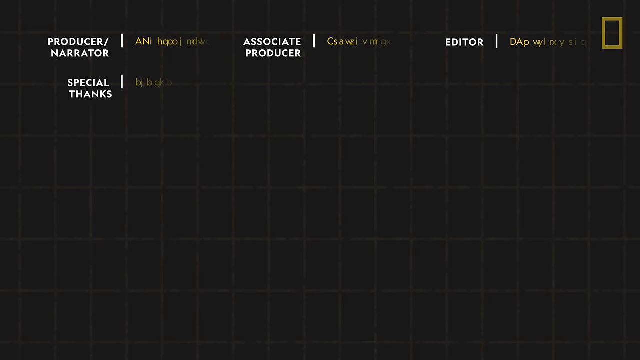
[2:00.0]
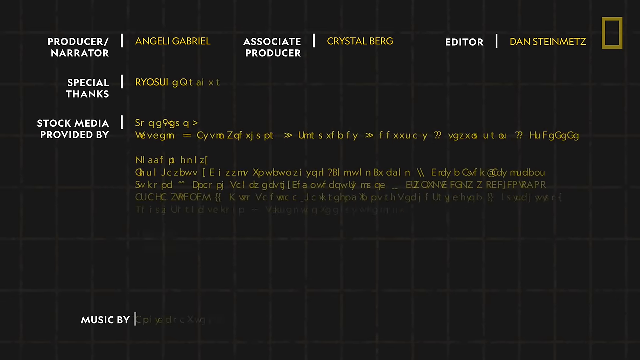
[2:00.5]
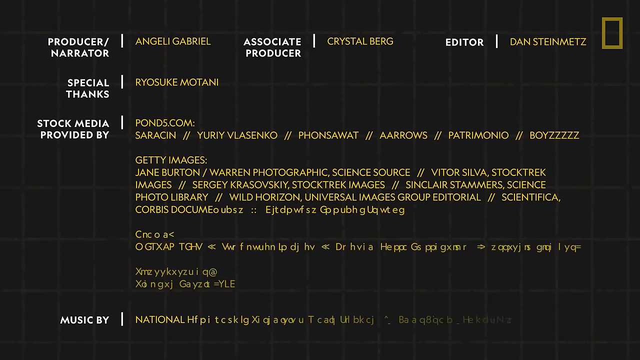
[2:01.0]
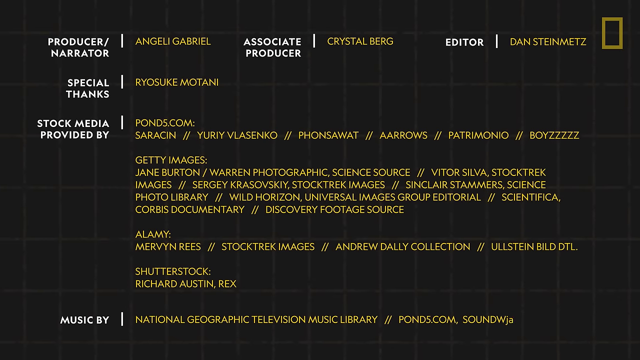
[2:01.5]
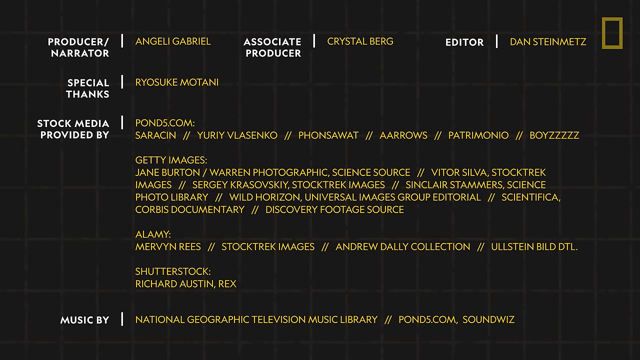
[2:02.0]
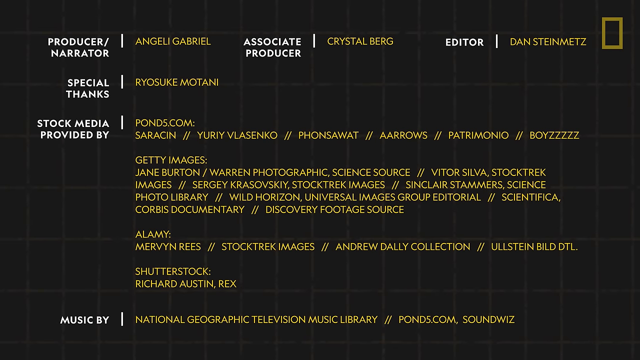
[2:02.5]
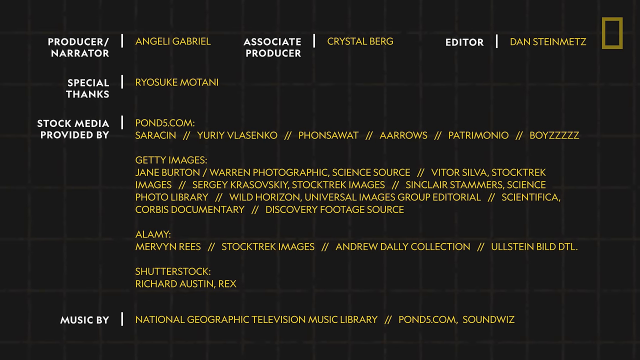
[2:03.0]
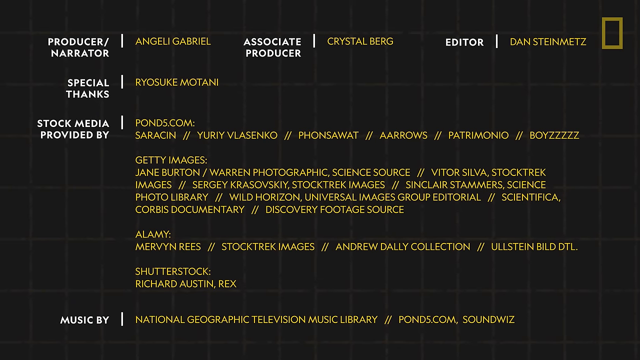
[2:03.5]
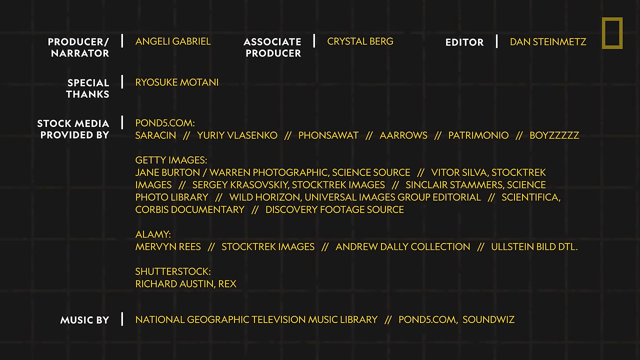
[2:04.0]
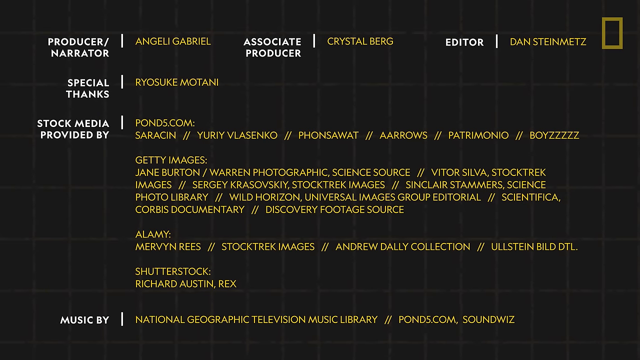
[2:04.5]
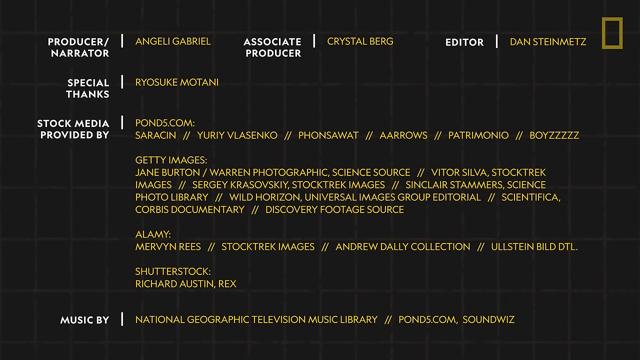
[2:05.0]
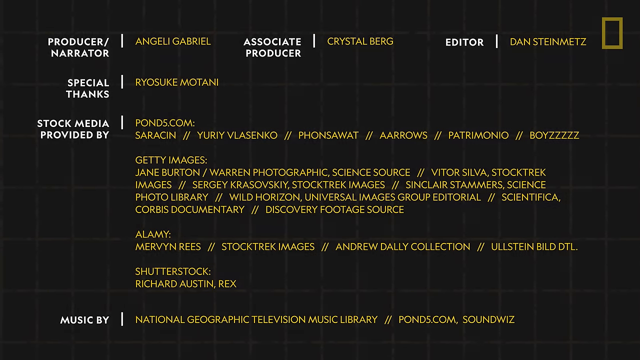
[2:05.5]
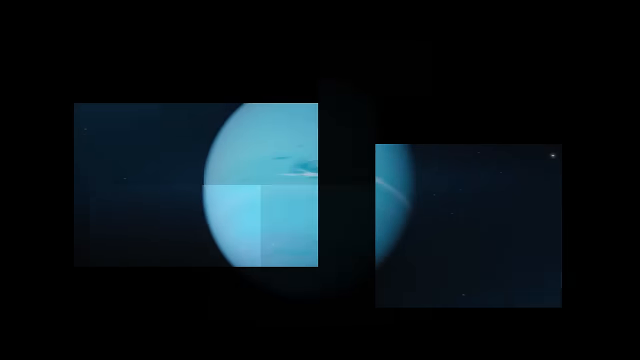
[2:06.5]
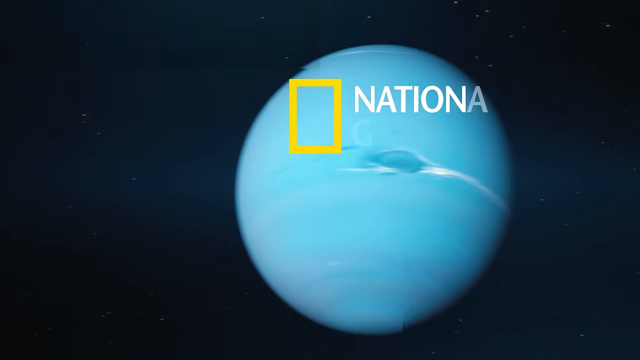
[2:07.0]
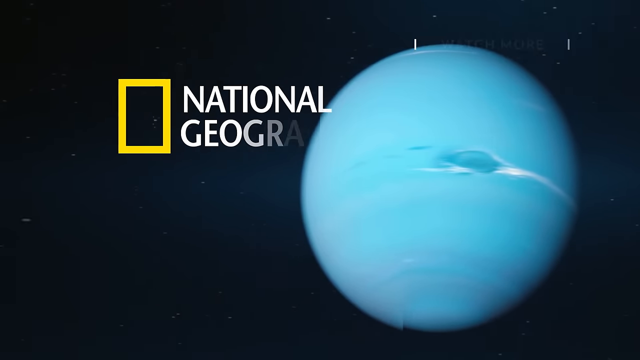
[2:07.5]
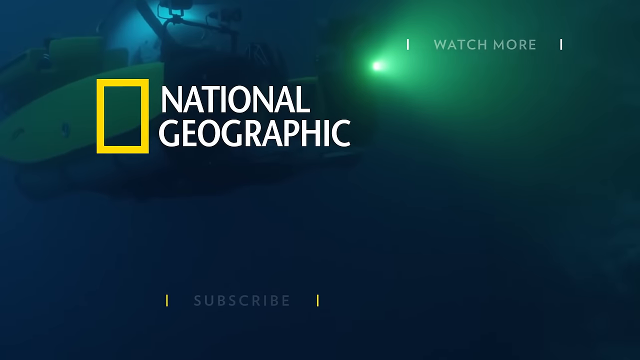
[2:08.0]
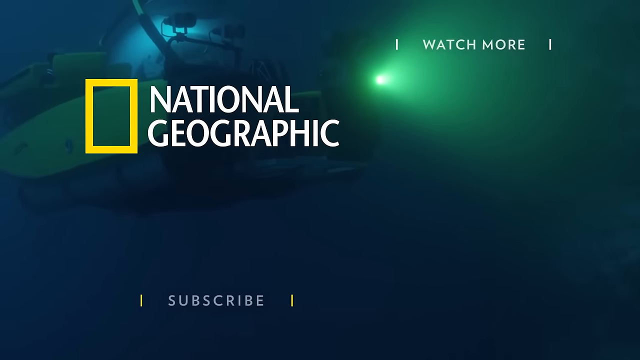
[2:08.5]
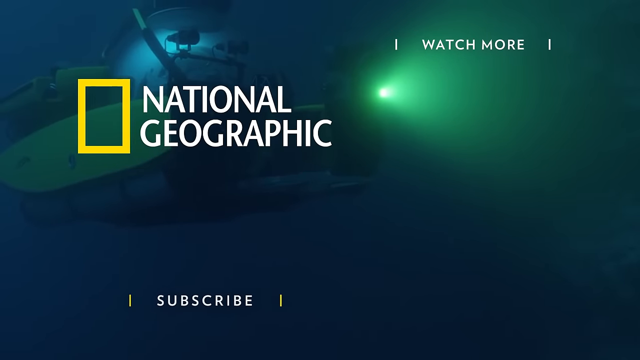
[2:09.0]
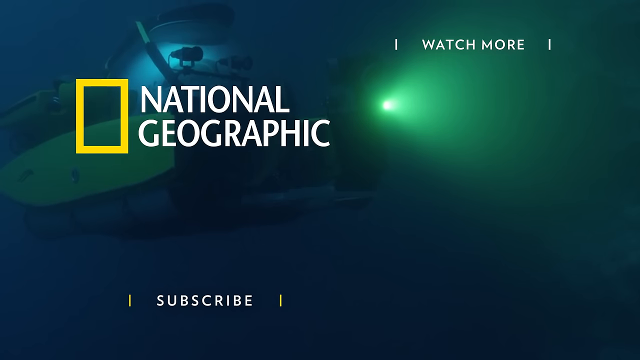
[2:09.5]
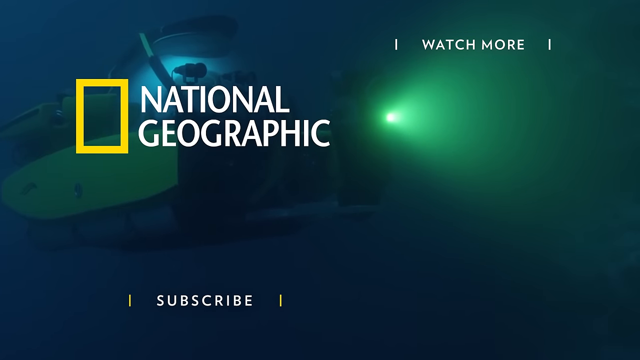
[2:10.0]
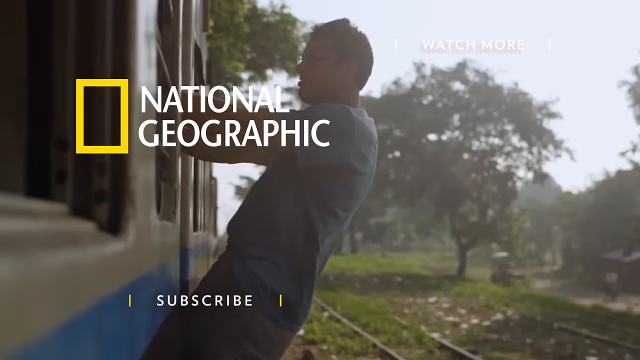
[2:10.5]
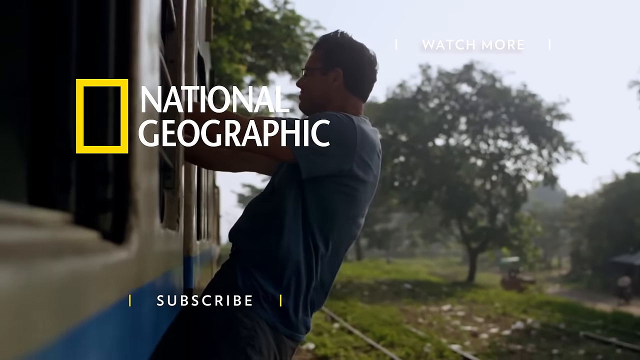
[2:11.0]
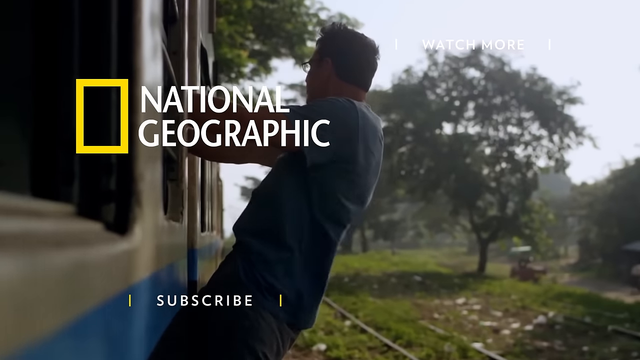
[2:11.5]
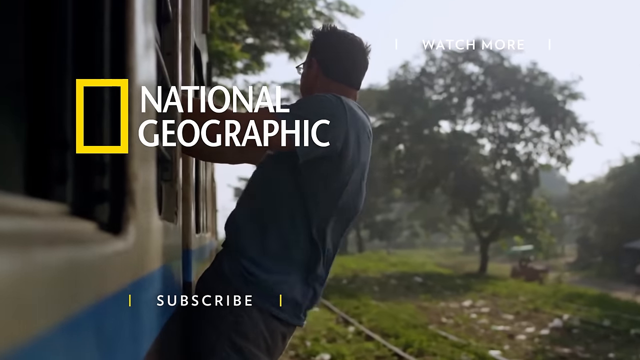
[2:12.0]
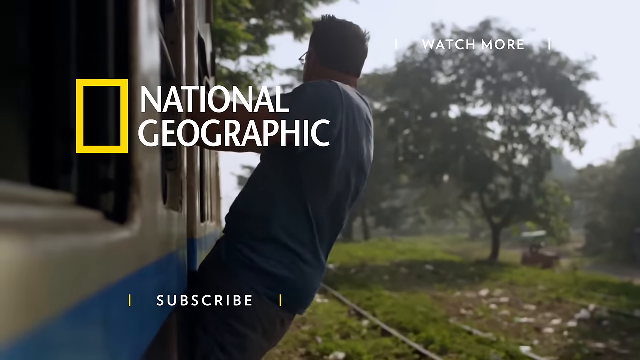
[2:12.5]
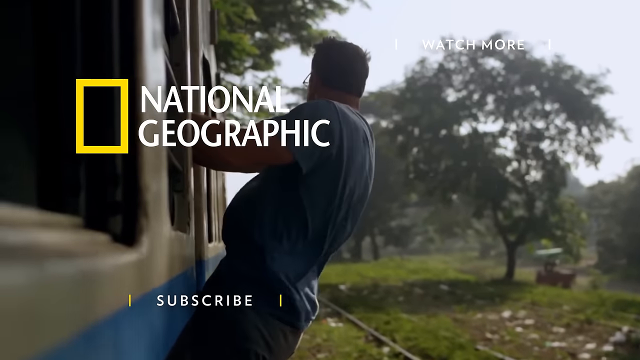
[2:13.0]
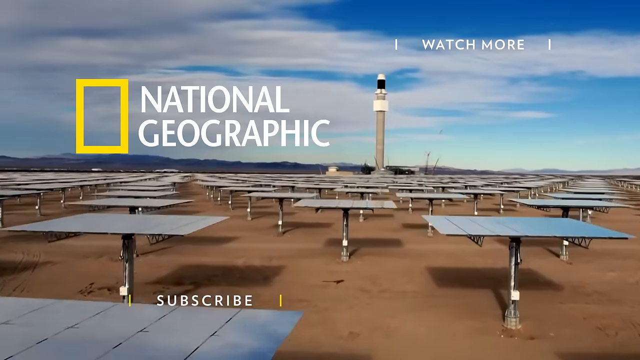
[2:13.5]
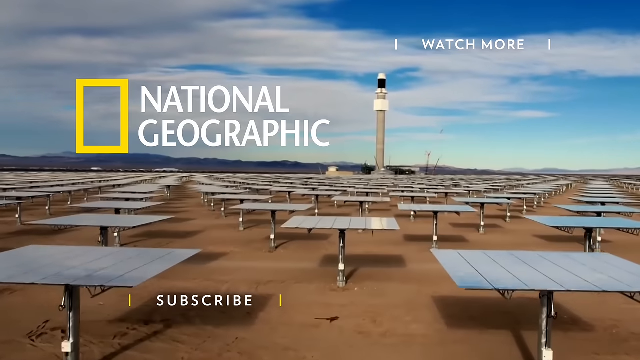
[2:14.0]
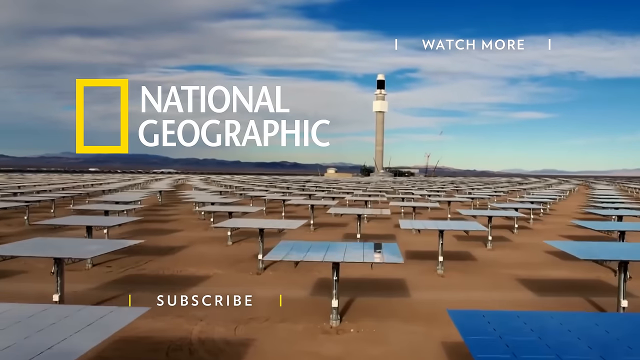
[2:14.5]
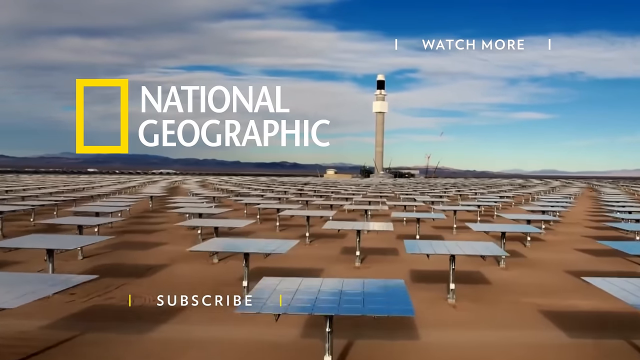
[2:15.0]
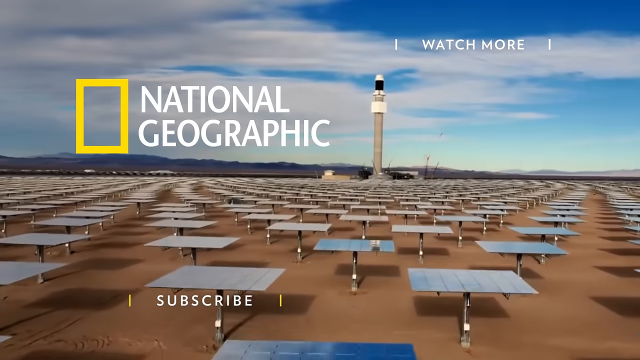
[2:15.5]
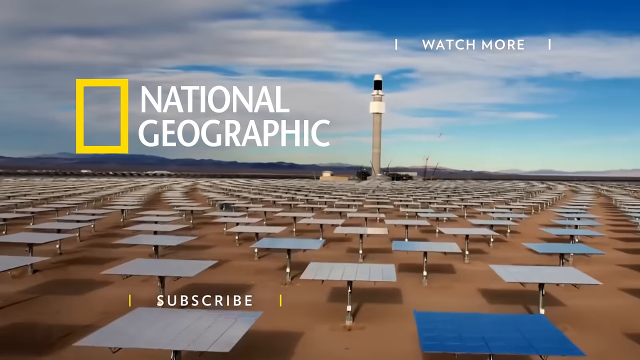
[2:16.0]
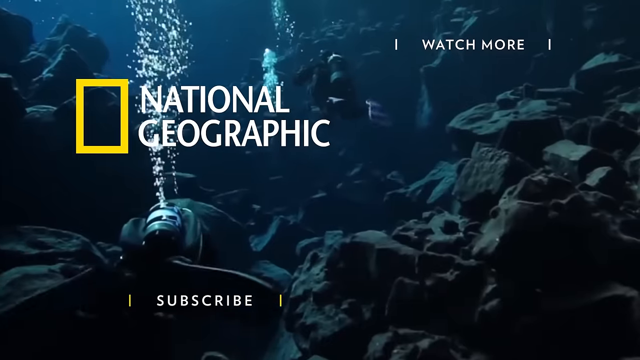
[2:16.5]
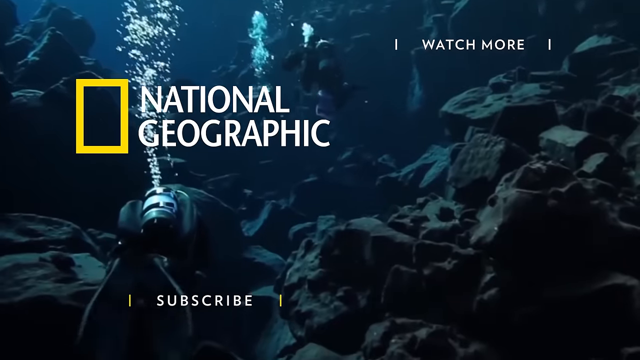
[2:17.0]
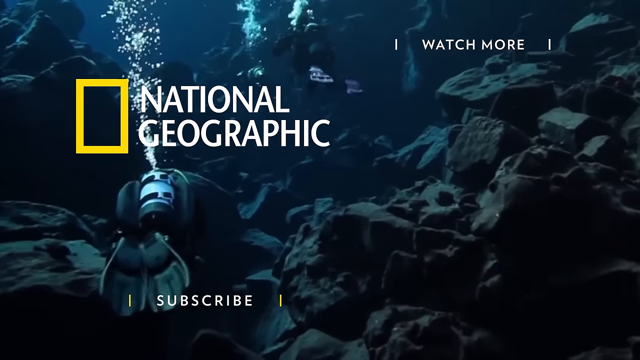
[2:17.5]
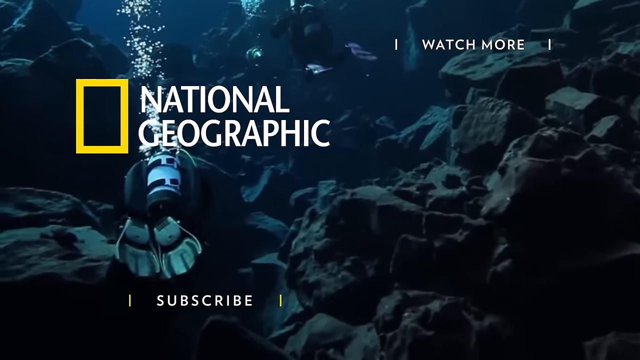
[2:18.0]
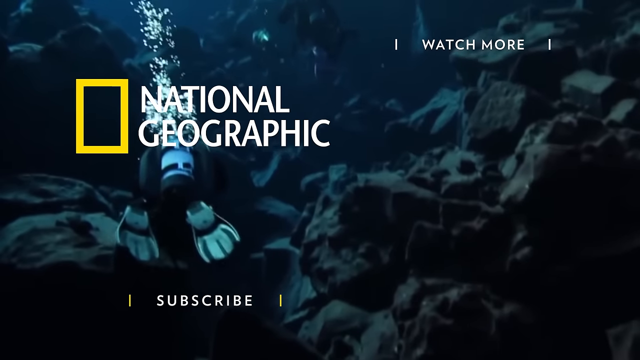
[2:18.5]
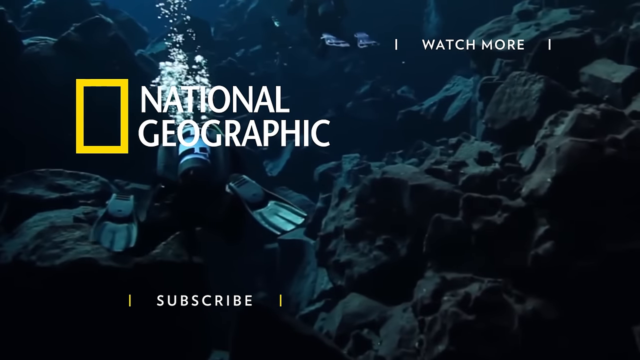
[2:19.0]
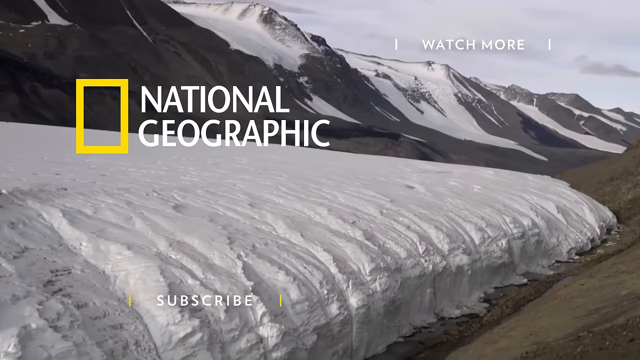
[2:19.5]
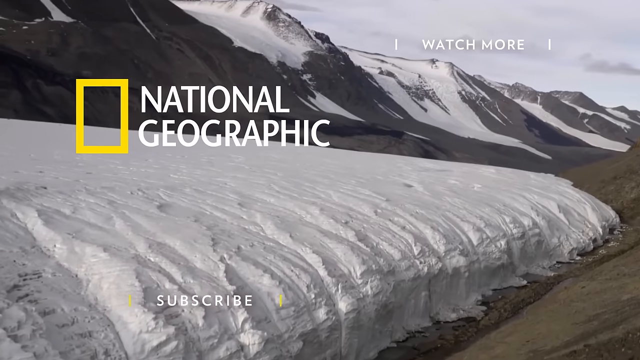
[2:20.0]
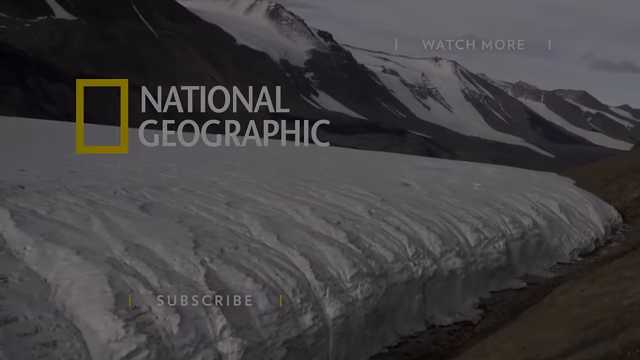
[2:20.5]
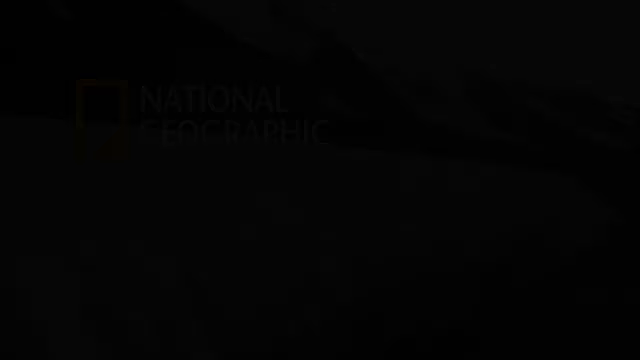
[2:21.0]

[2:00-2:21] Ending credits appear as multiple lines of text, including "narrator, Anjeli Gabriel", "Associate producer, Crystal Byrd", "Editor, Dan Steinmetz", "Special thanks, Ryosuke Mutani" and "Stock media provided by Pond5.com", followed by a long list of sources including Getty Images, Science Photo Library, Shutterstock and StockTrek Images, and "Music by National Geographic Television Music Library". The video cuts to an end splash screen showing the National Geographic logo. In the very top right corner it reads "watch more", and in the bottom left corner it reads "subscribe". The background shows a deep-sea submersible with its light on being lowered into the ocean. It then cuts to a stock video of a man riding the side of a moving train car, then a drone shot of a large solar energy farm with a tower in the center, then a stock video of two divers surrounded by various gray rocks deep underwater with bubbles coming up from their tanks. The final shot is a drone shot of a large white glacier surrounded by white snow-covered mountains.